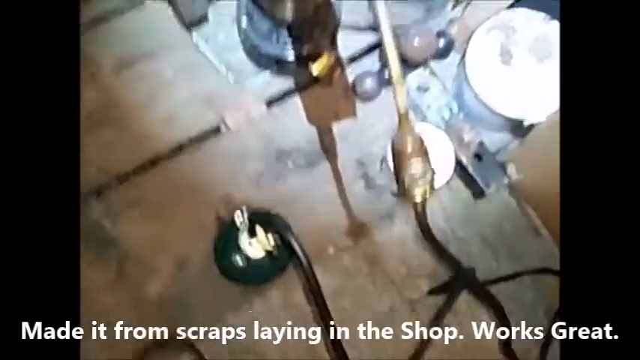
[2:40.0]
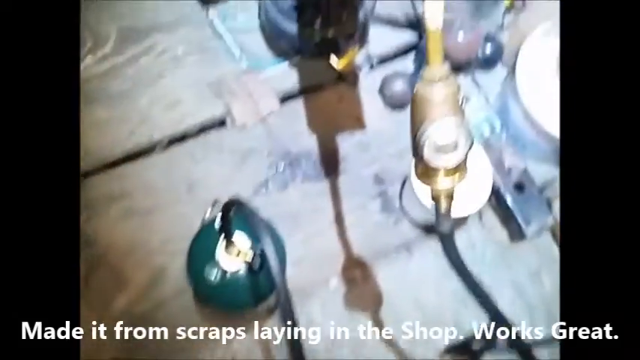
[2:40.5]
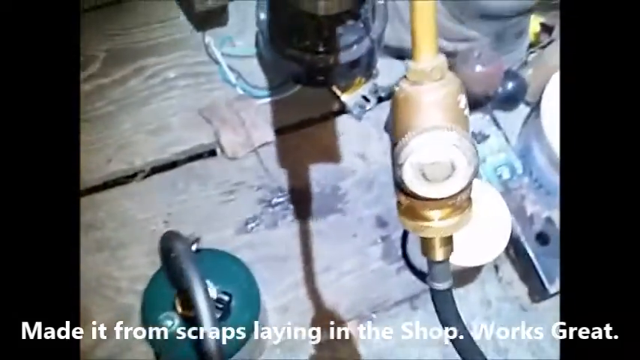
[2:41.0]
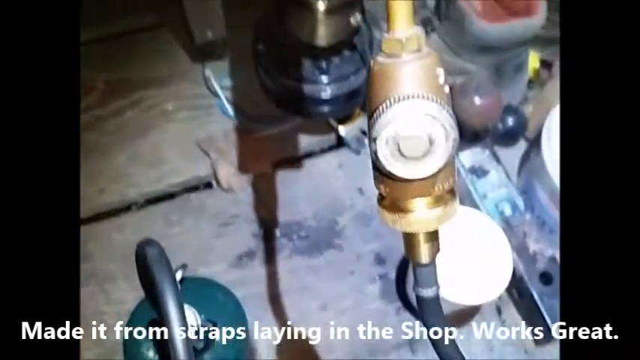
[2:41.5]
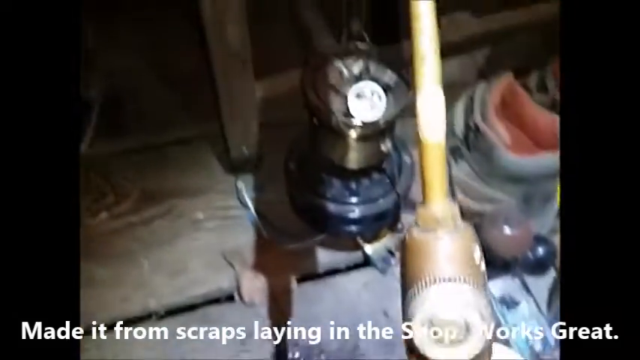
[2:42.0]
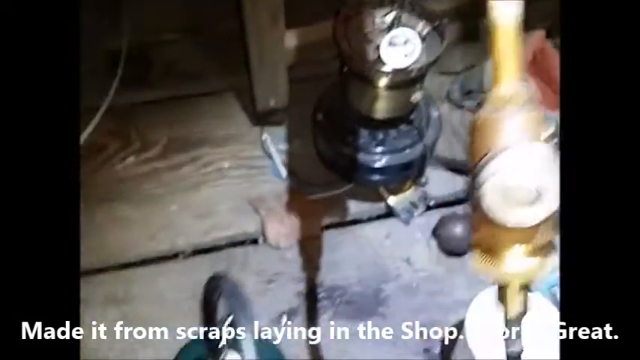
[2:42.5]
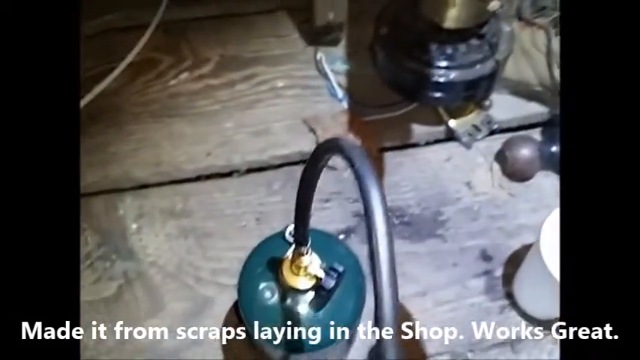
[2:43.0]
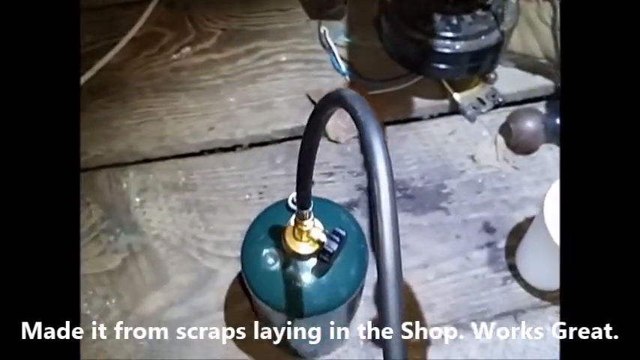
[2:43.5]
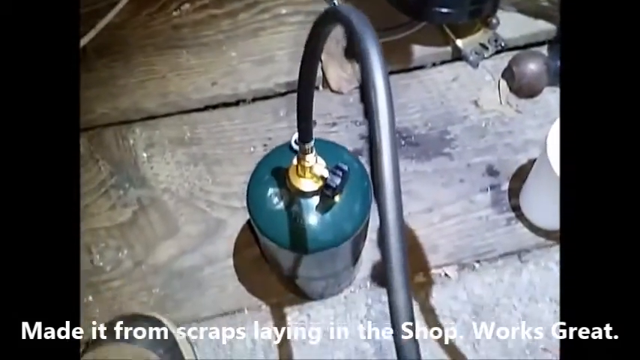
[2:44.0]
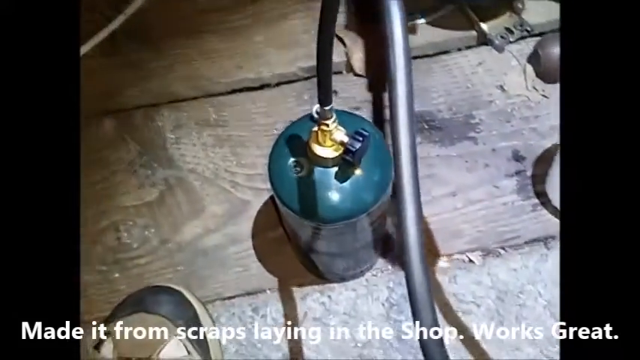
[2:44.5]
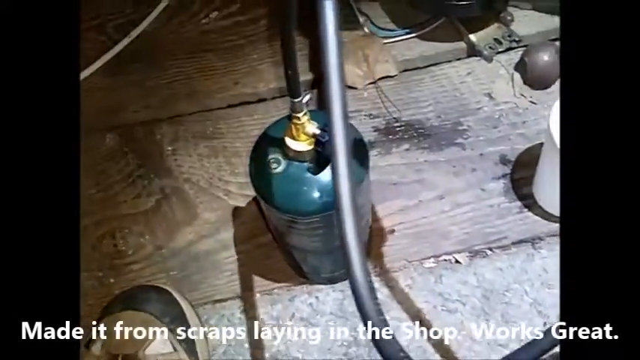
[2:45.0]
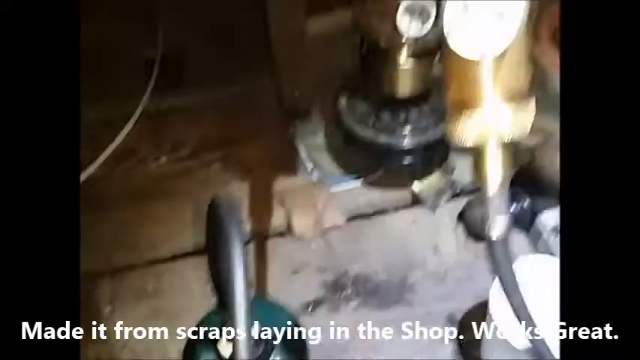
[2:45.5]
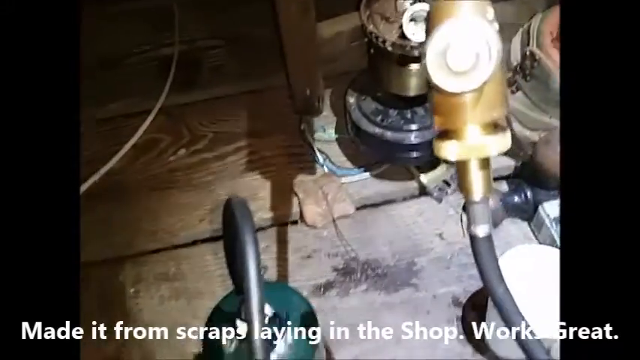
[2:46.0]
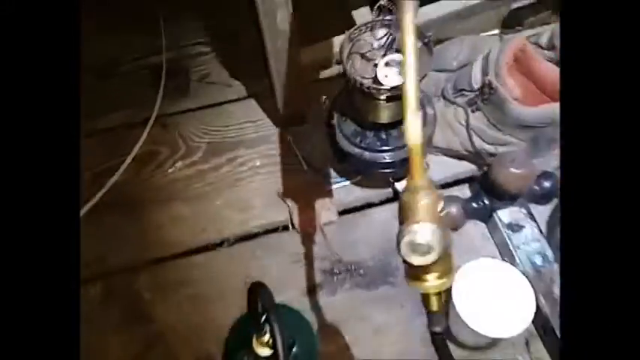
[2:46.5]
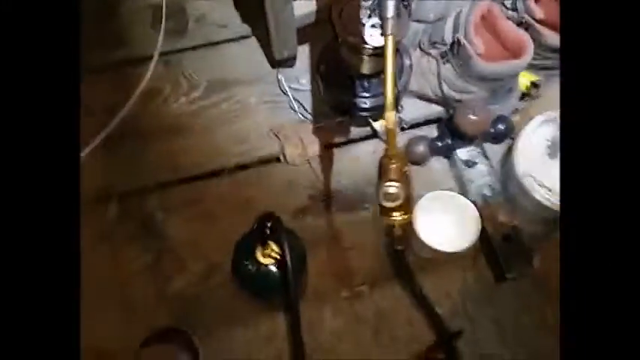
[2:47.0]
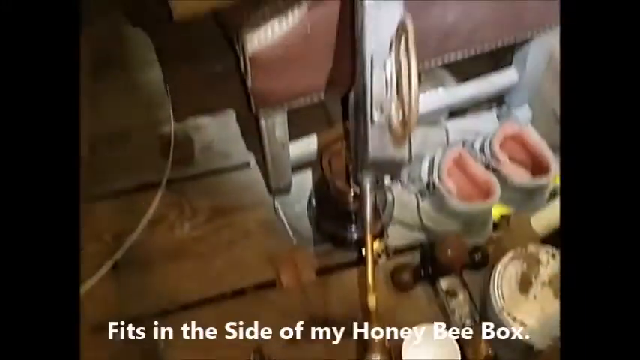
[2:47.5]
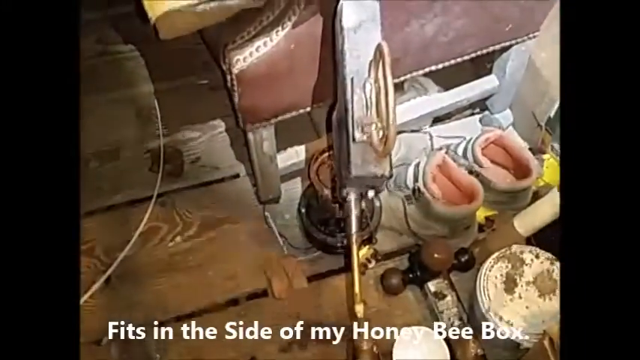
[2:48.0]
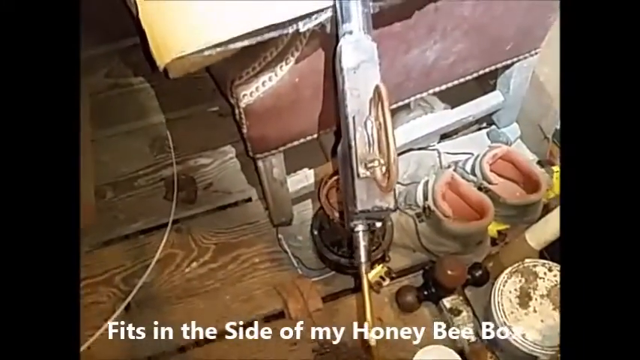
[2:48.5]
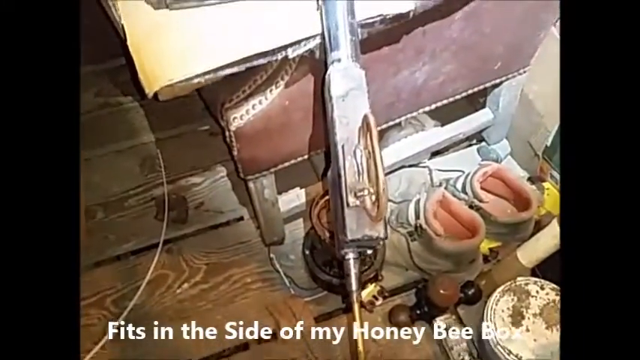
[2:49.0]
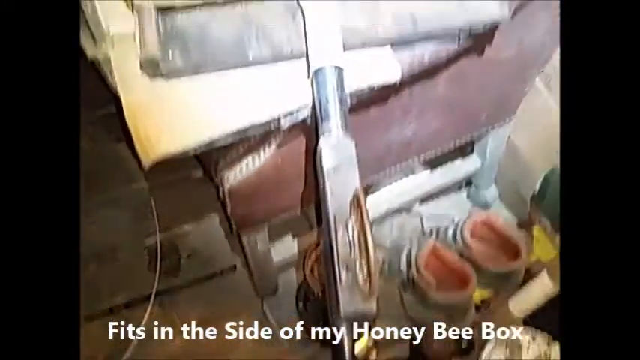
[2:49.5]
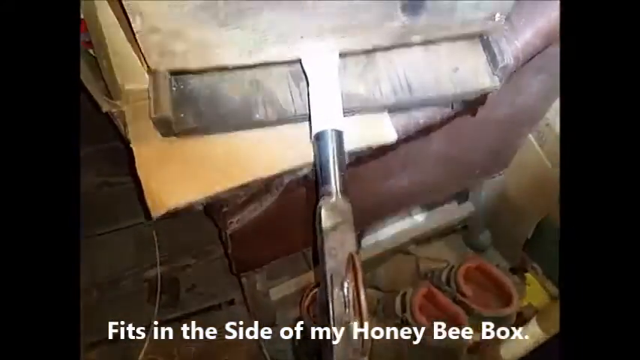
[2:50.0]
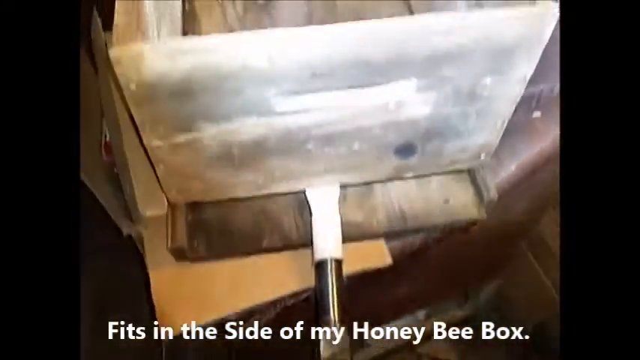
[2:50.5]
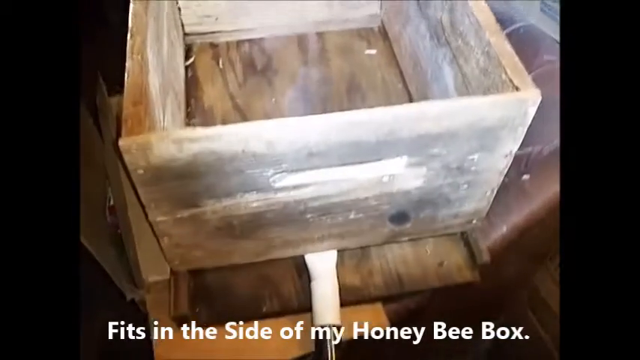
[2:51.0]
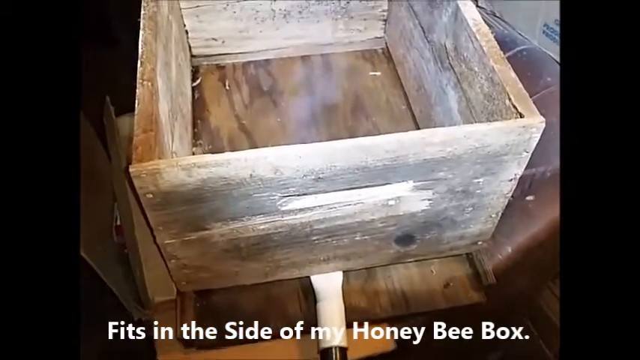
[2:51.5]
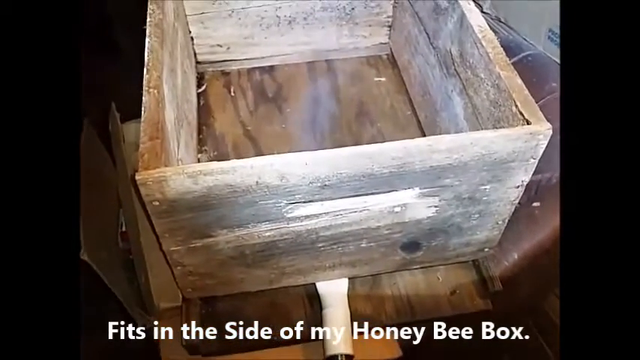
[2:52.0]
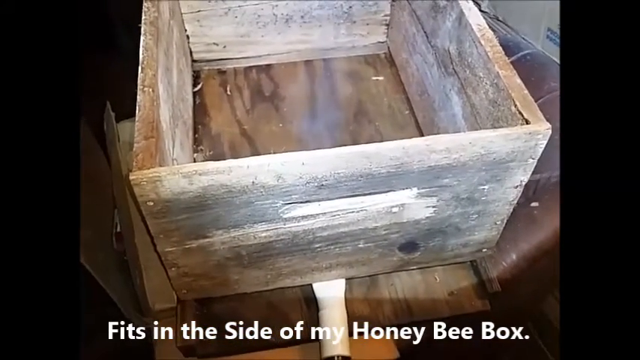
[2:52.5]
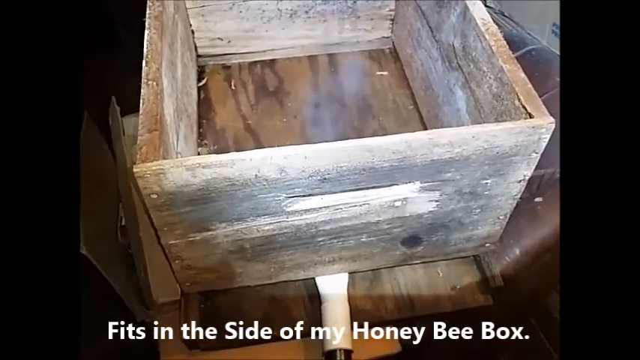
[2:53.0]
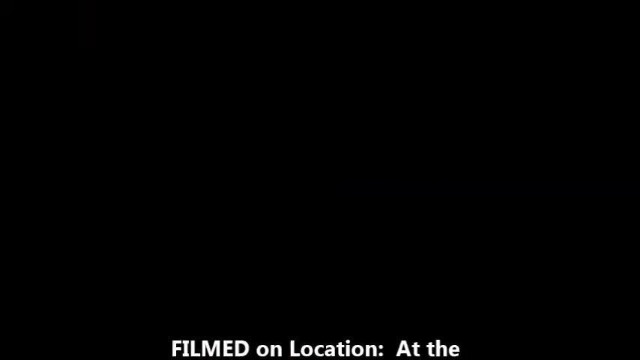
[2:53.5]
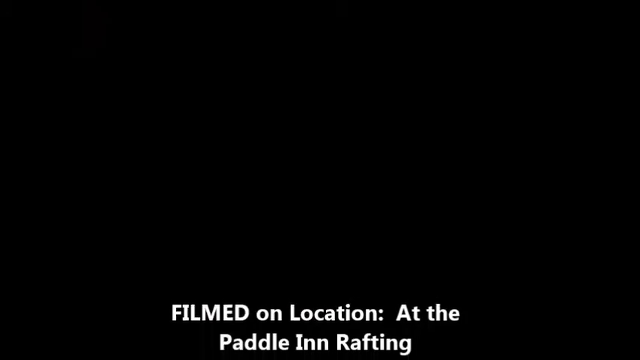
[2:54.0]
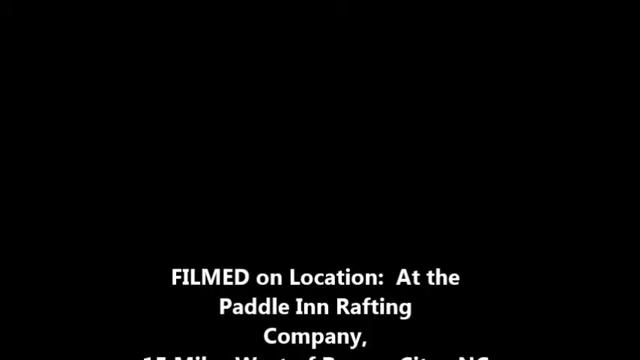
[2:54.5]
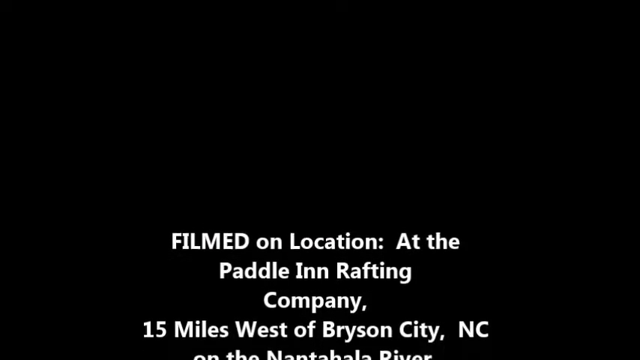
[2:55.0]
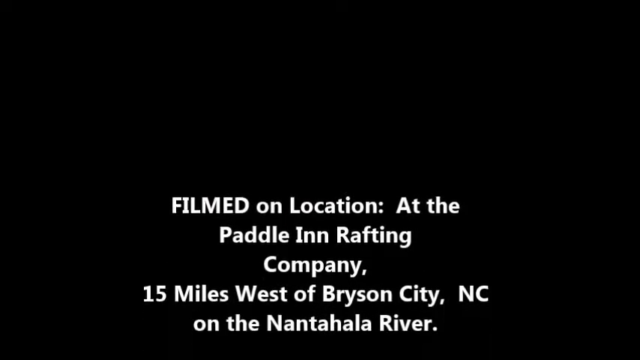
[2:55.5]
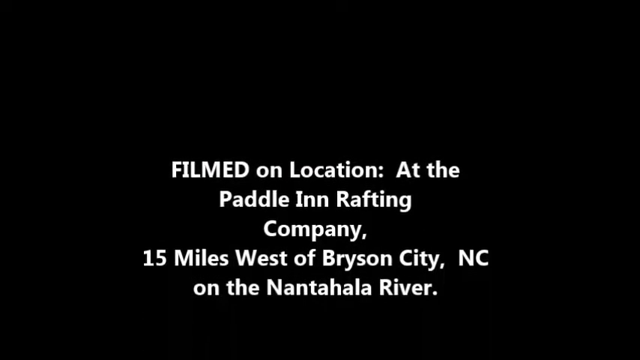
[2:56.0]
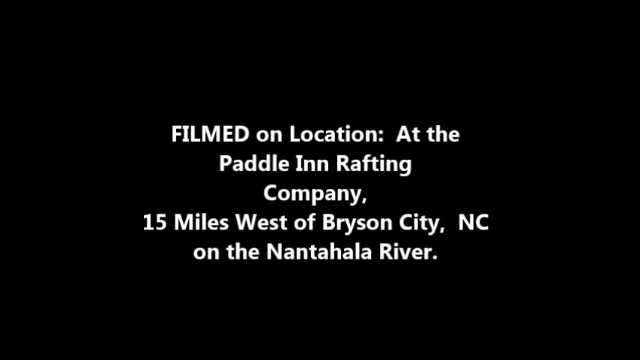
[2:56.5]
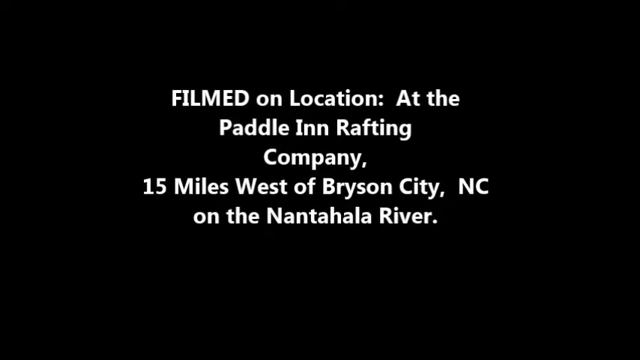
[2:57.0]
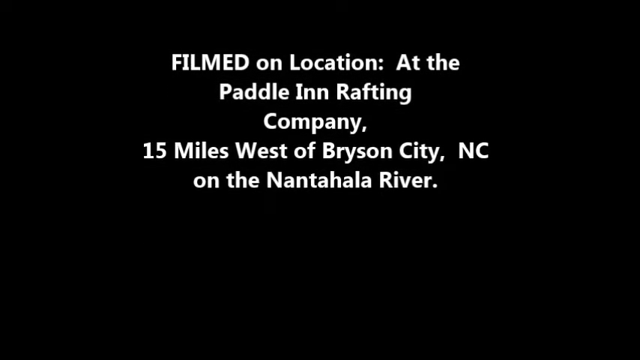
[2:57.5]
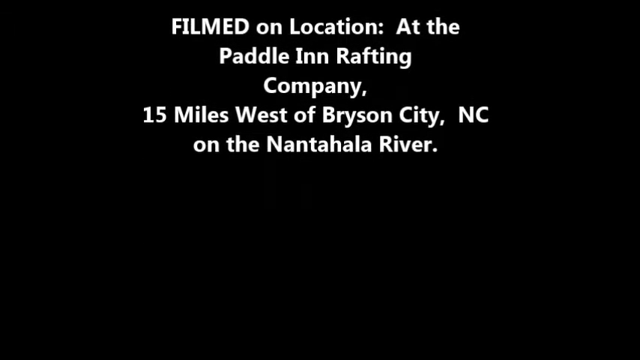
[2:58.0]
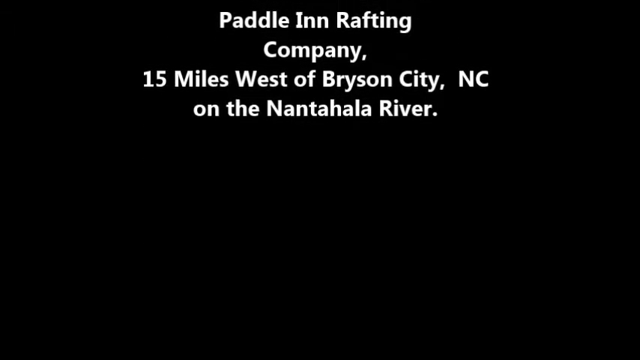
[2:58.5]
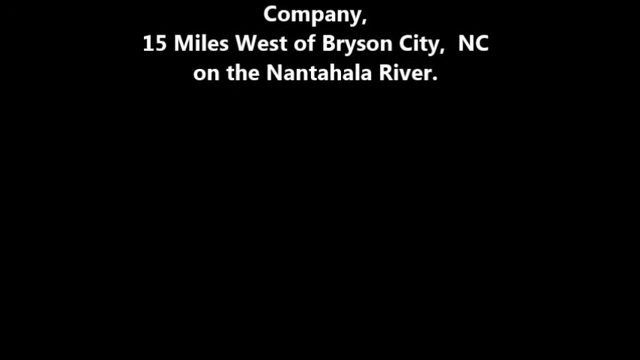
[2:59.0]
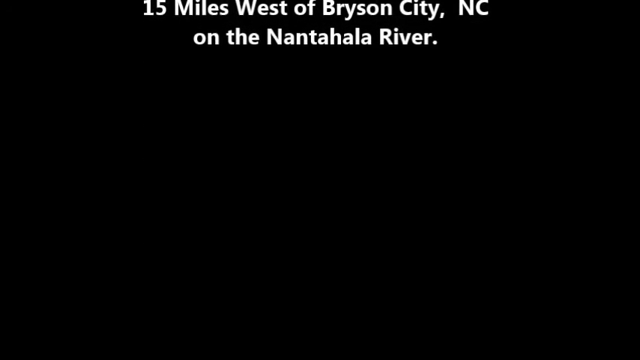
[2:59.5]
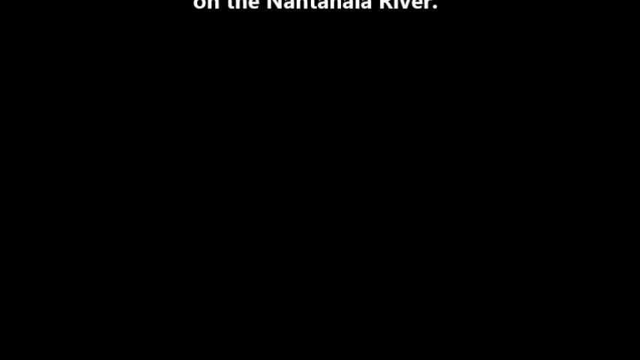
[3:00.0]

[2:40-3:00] Different valves and items on the floor are shown. The camera comes in very close to a golden valve, then shows a green canister on the floor attached to hoses. The camera is pulled back up to show the box and the water vapor going into it. The subtitles read "made it from scraps laying in the shop, works great. fits in the side of my honey bee box," as the camera is pulled up to show the box. A black screen then appears with credits reading "filmed on location at the Paddle Inn Rafting Company, 15 miles west of Bryson City, North Carolina, on the Nata Hollow River." The credits roll up to the end of the screen.